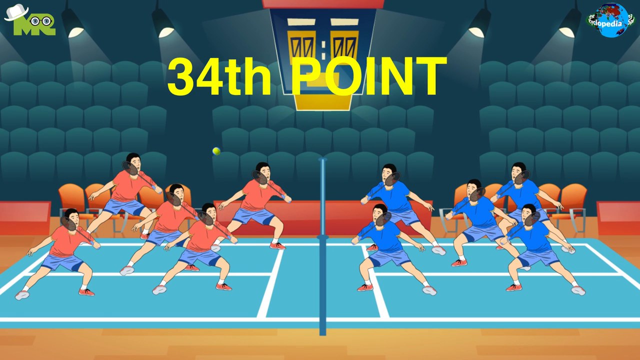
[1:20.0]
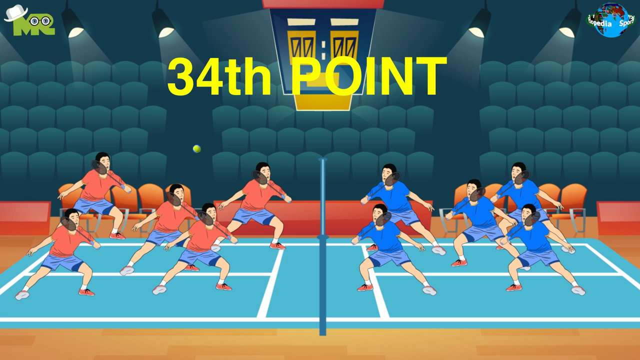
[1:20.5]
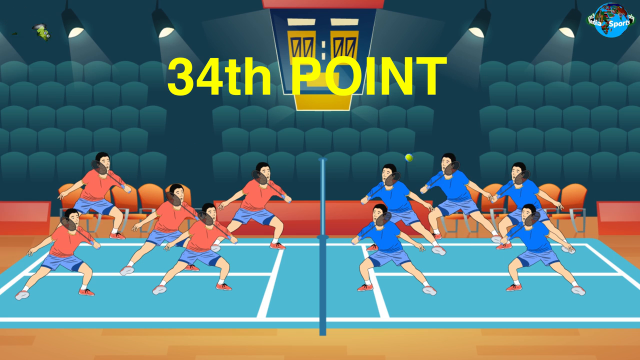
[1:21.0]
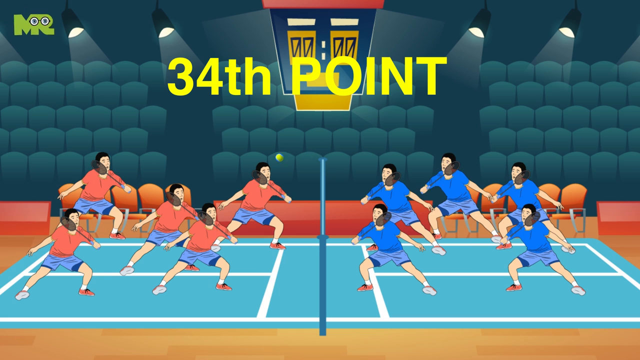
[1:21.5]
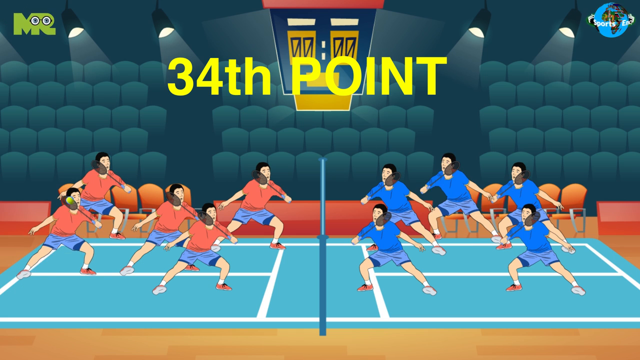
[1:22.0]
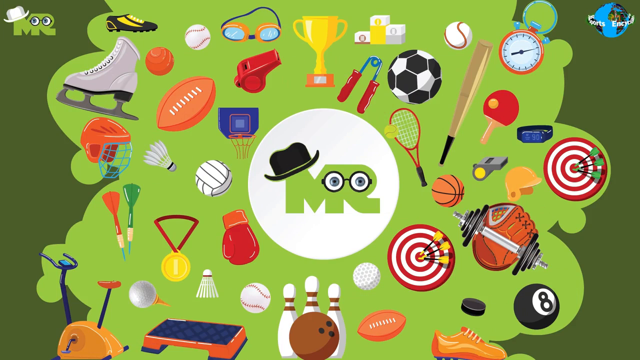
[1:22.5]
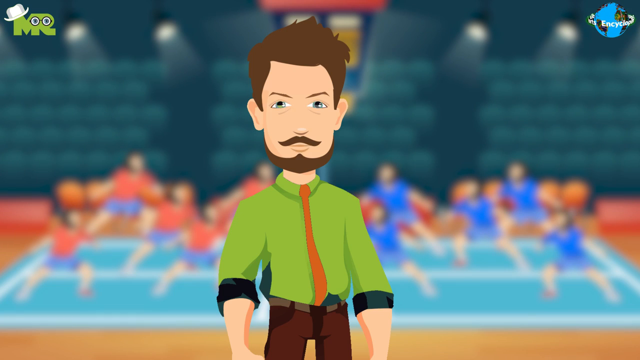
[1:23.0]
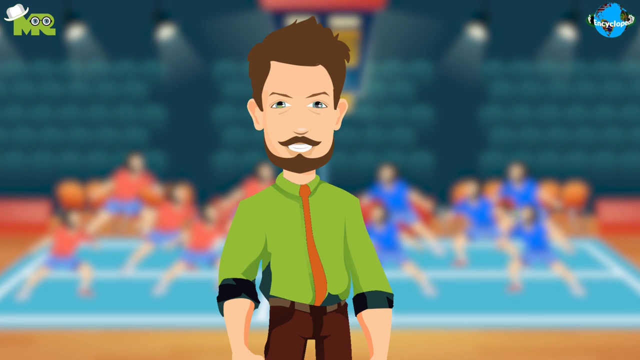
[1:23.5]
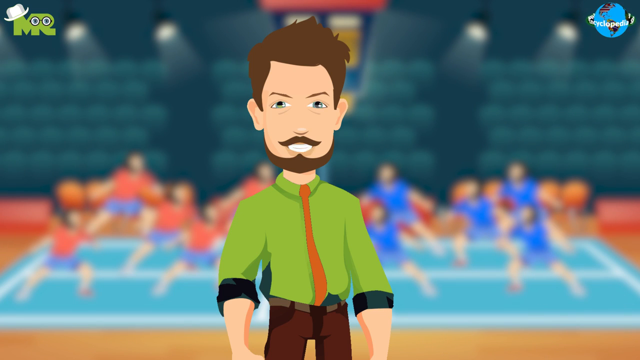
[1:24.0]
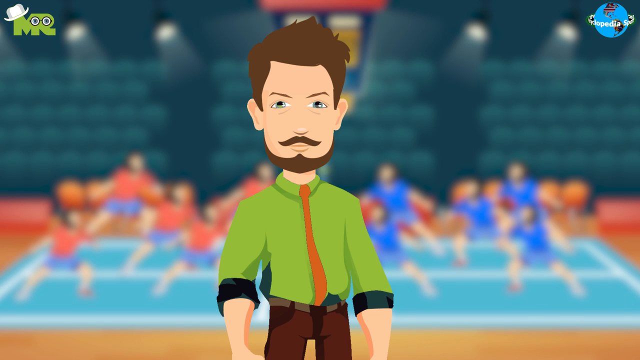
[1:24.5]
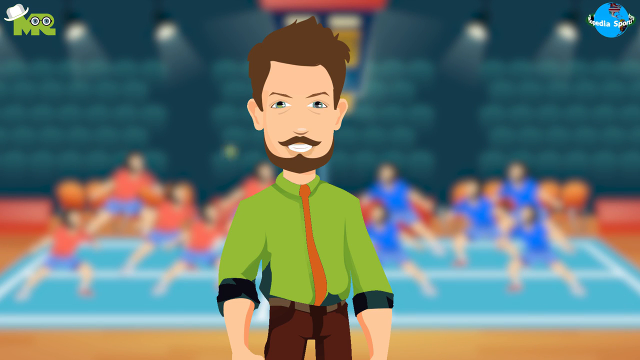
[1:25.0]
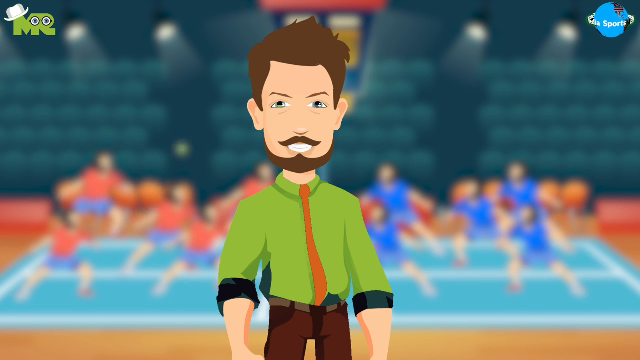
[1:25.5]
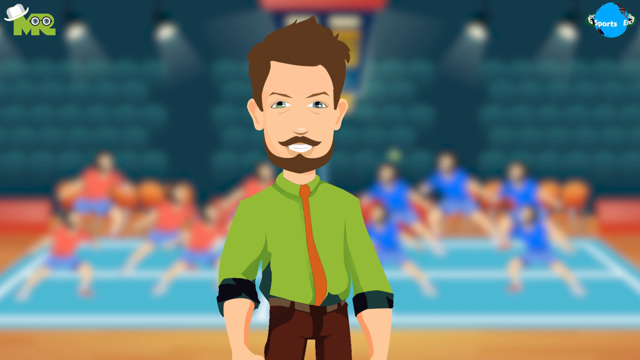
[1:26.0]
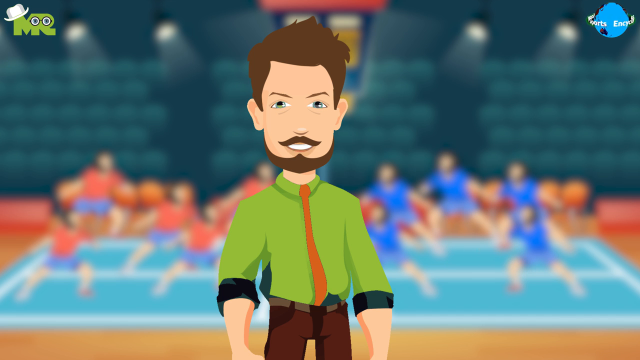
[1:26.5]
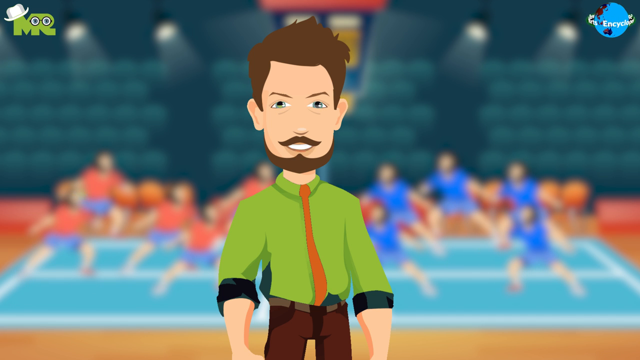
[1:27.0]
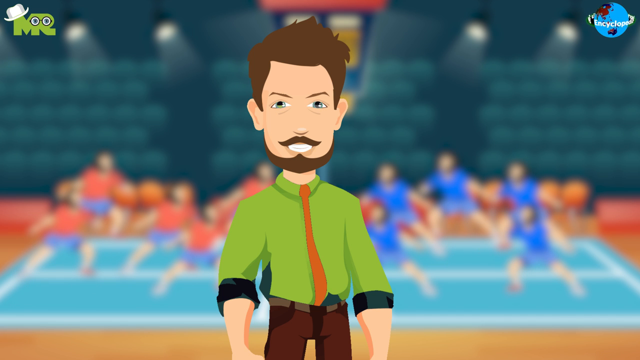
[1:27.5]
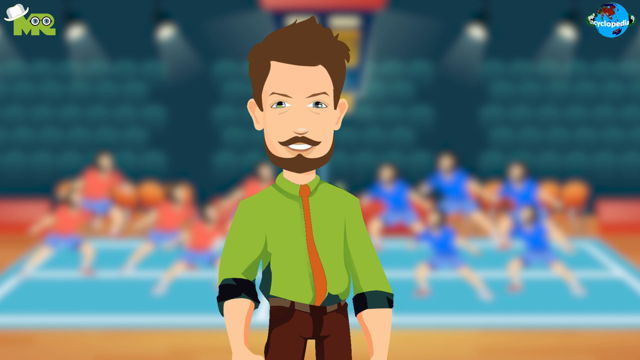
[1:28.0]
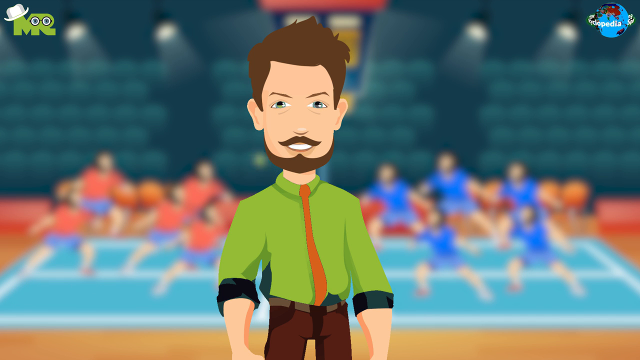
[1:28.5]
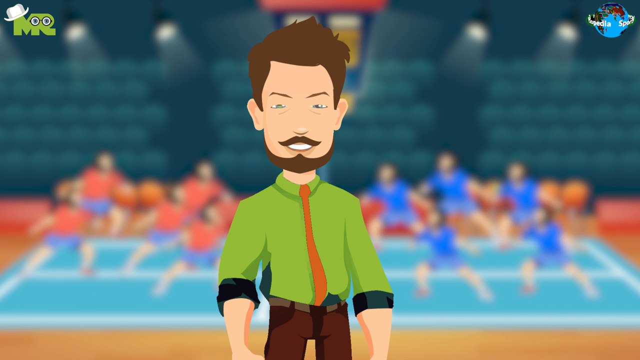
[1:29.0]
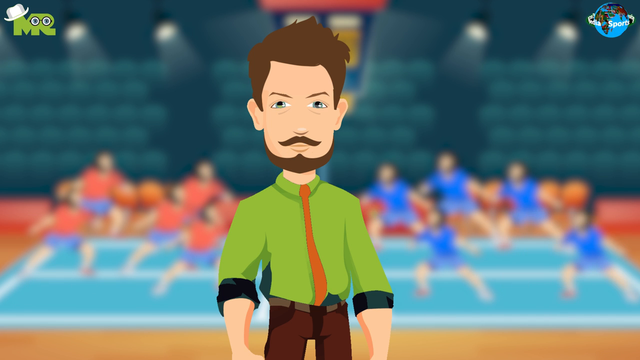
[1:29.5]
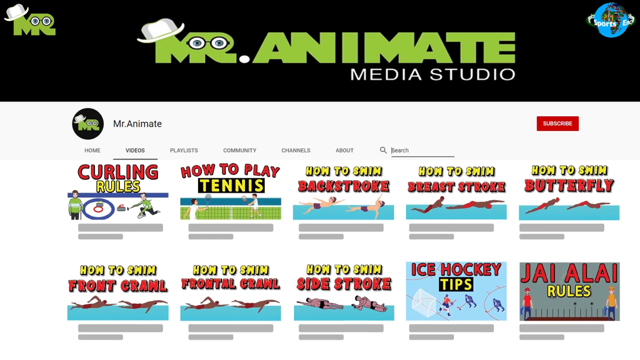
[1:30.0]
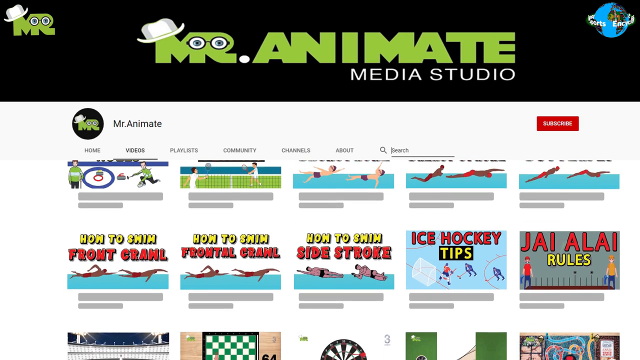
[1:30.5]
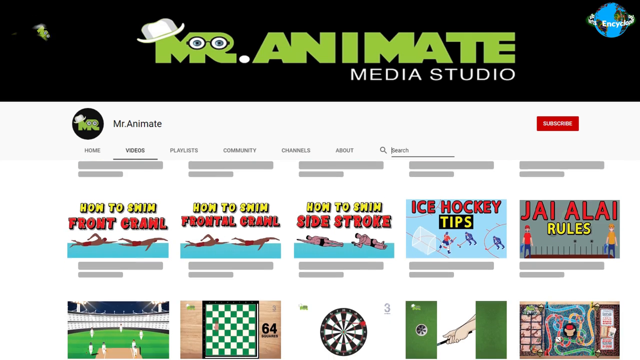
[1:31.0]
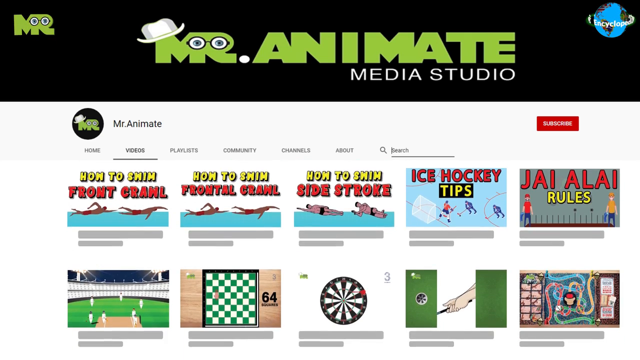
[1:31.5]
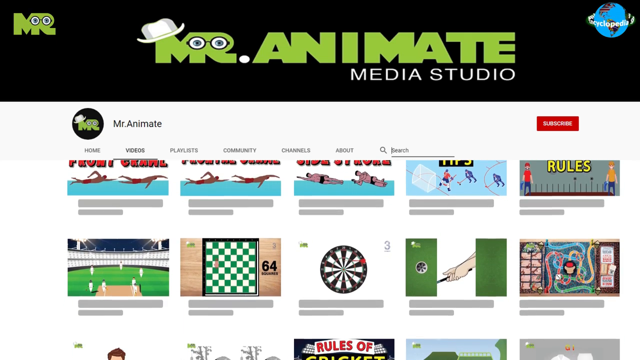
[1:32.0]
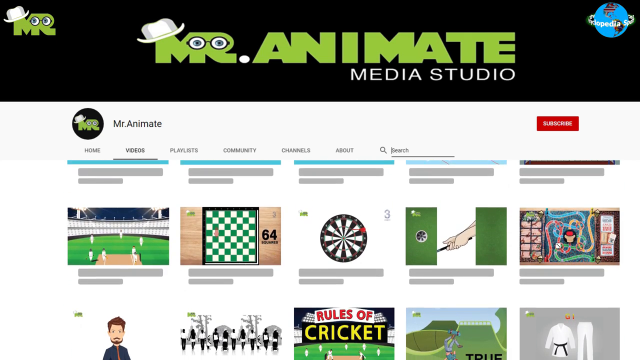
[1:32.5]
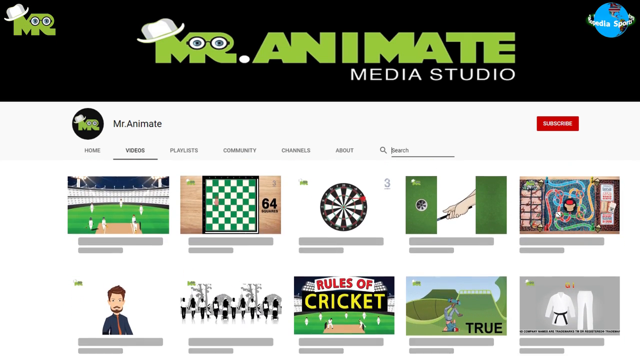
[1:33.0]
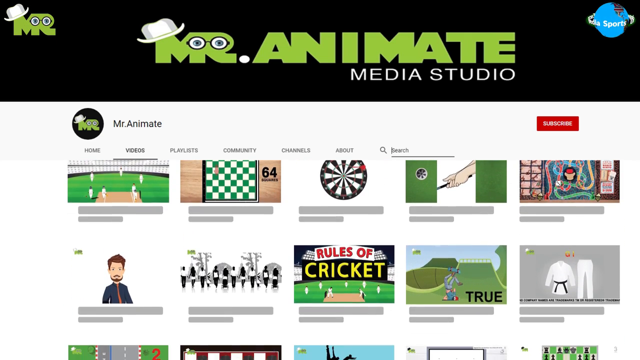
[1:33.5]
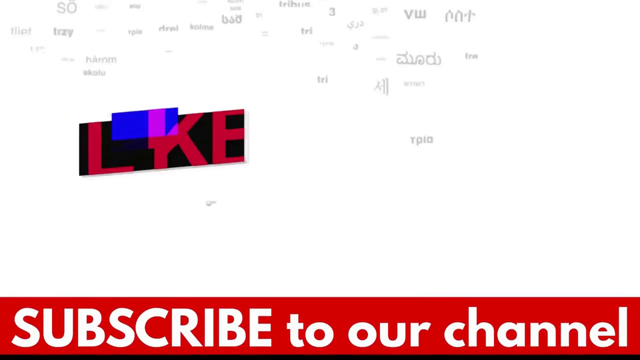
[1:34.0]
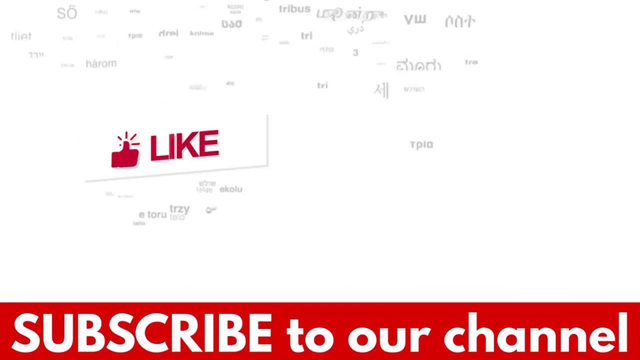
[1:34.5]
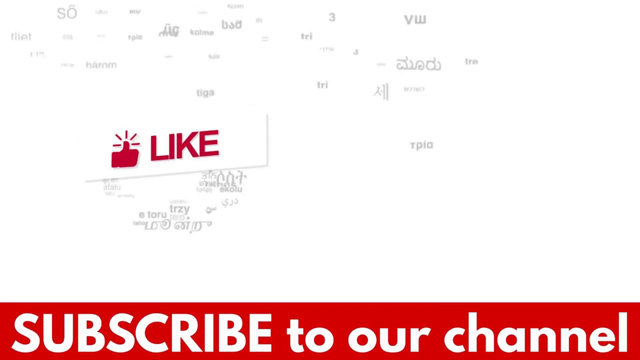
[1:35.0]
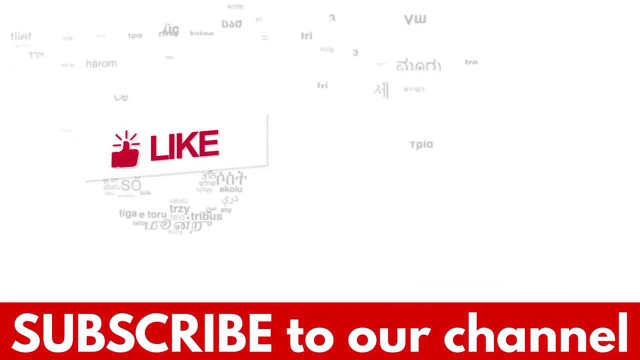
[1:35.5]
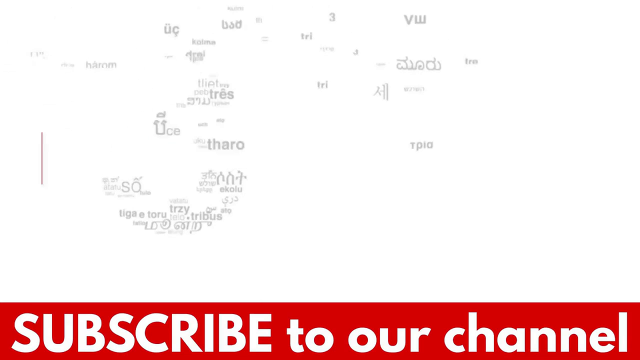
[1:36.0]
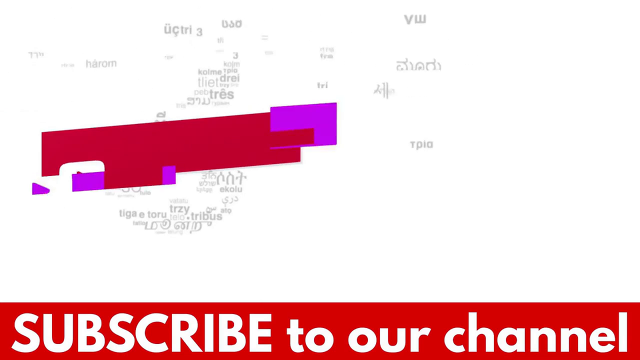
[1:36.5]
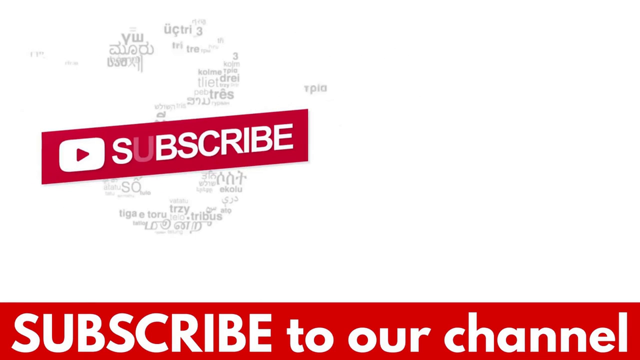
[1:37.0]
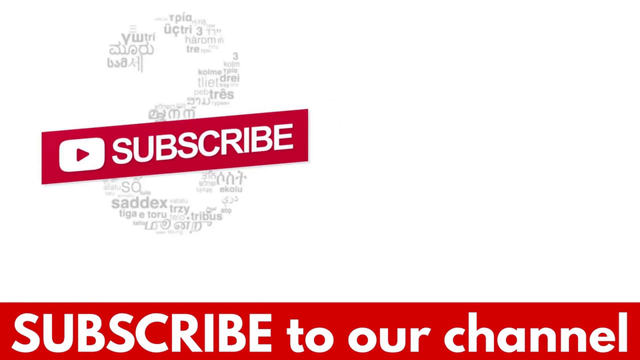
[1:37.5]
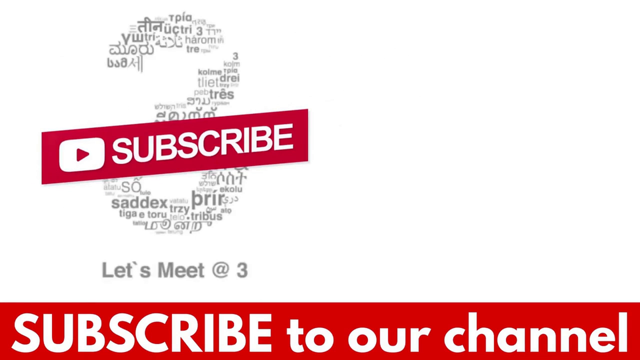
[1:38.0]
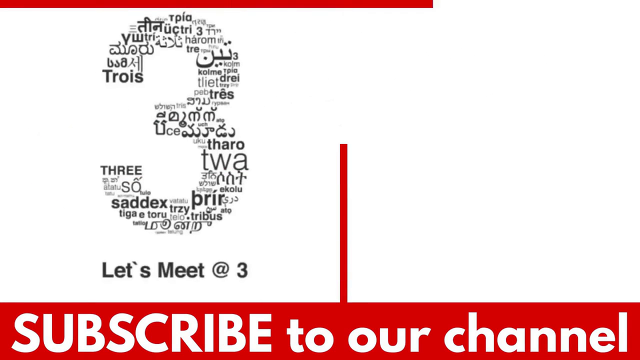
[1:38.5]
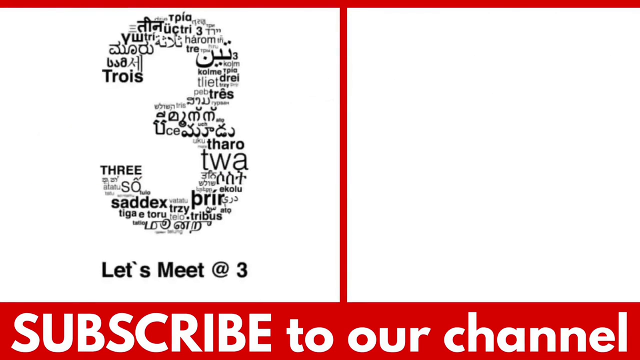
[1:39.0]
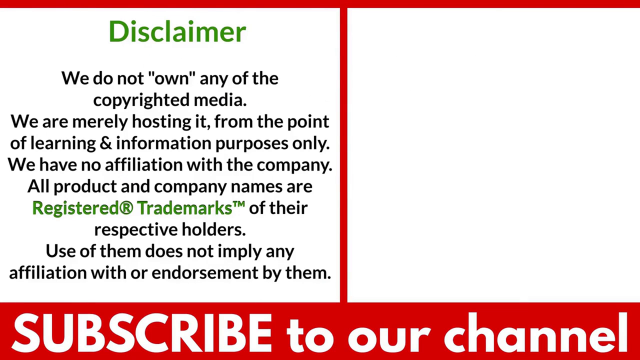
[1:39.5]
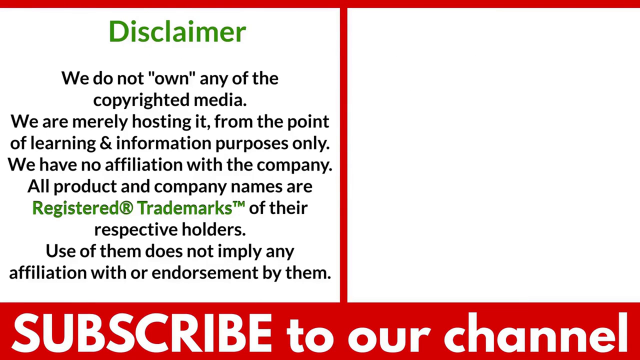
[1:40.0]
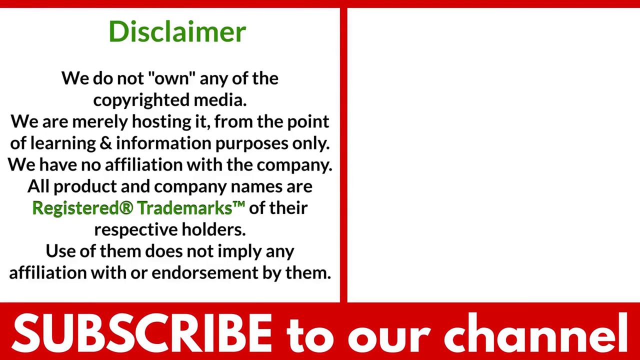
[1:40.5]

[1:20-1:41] The text "34th point" is still on screen as the tennis ball goes back and forth. The video then switches to a graphic of a character who kind of looks like an elf. He has brown hair, and his eyes are visible, unlike the other characters in the animation so far. He wears a green dress shirt with a long orange tie and looks at the viewer very sternly with almost squinted eyes, appearing focused and determined. He moves around a bit, especially his eyes and mouth: his eyes blink a couple of times and his mouth moves. Then a YouTube channel, Mr. Anime Media Studio, is shown along with its logo: the "Mr." part has a hat on the top left, and there are eyes on the R that kind of look like glasses.